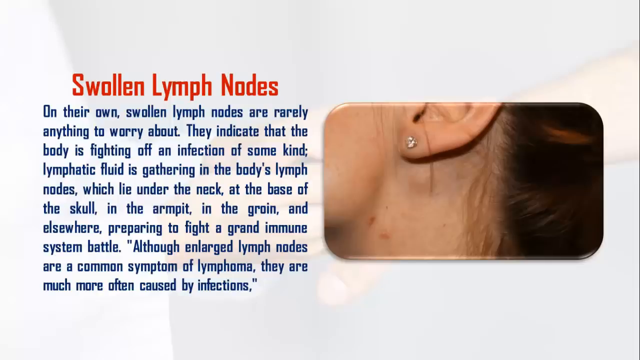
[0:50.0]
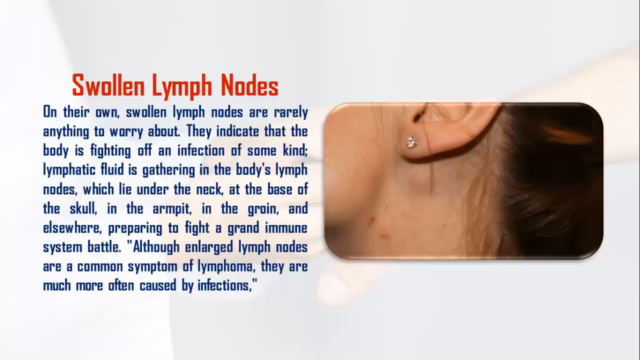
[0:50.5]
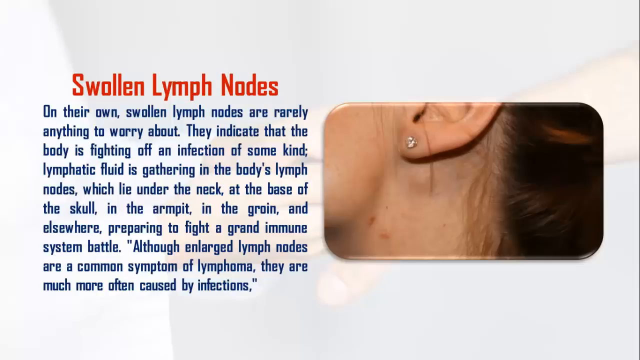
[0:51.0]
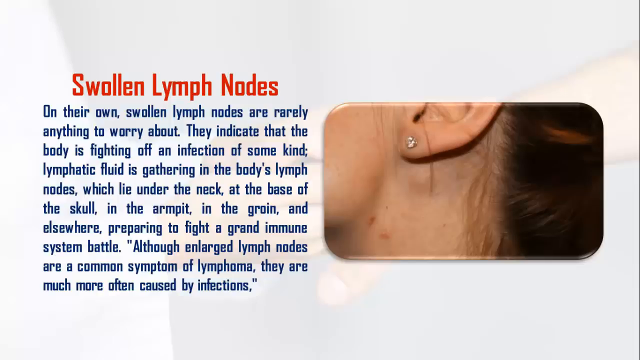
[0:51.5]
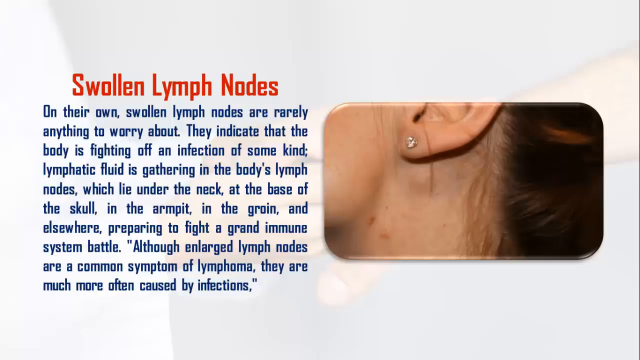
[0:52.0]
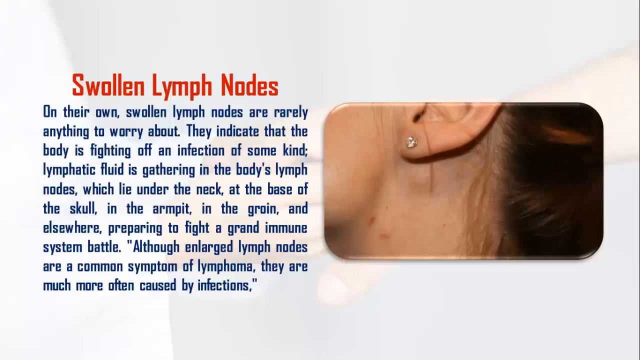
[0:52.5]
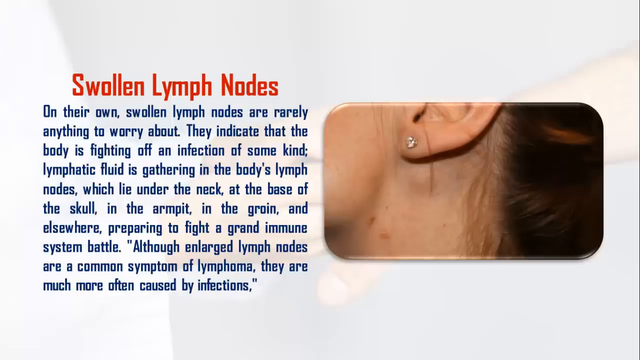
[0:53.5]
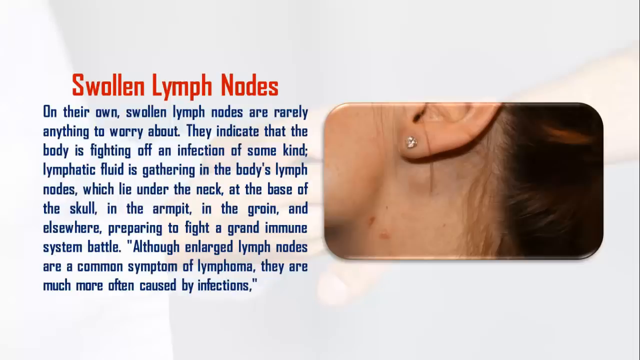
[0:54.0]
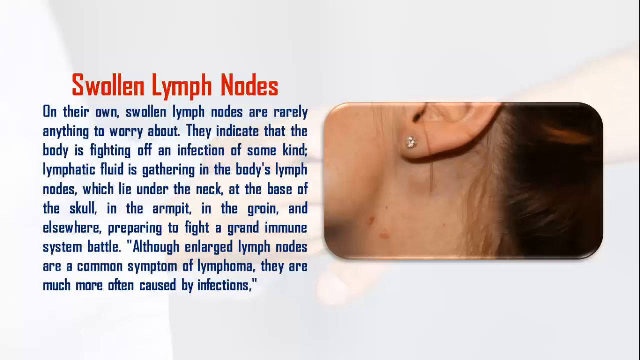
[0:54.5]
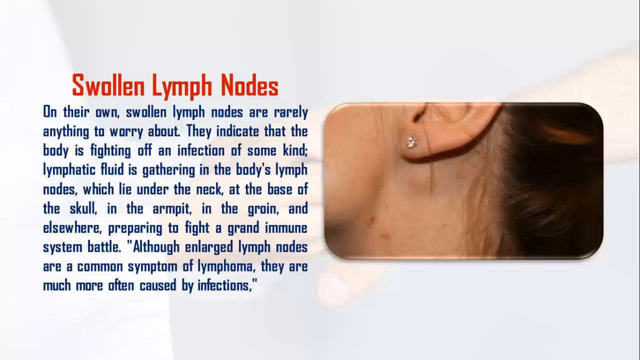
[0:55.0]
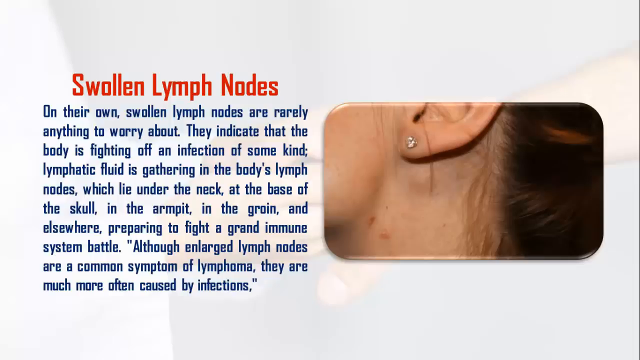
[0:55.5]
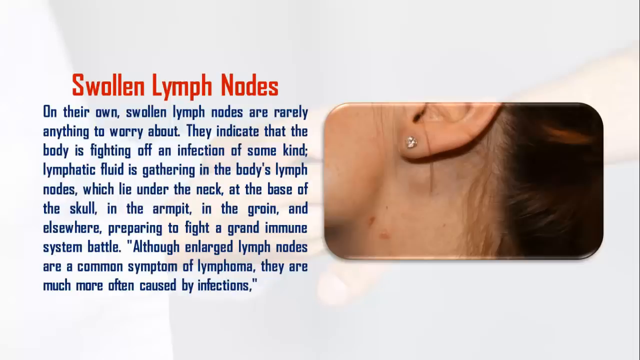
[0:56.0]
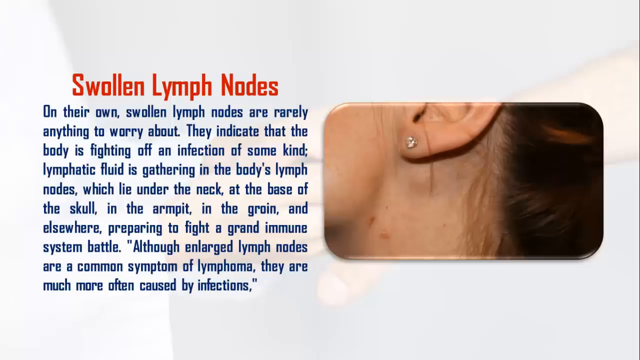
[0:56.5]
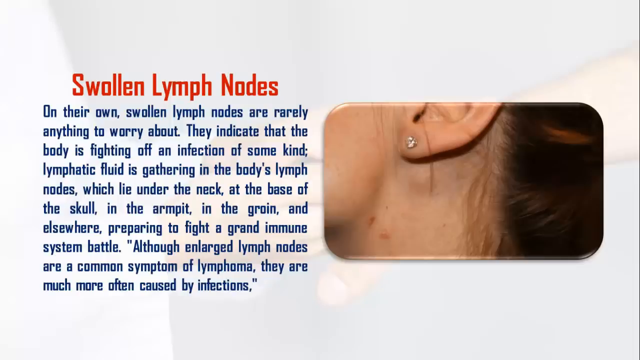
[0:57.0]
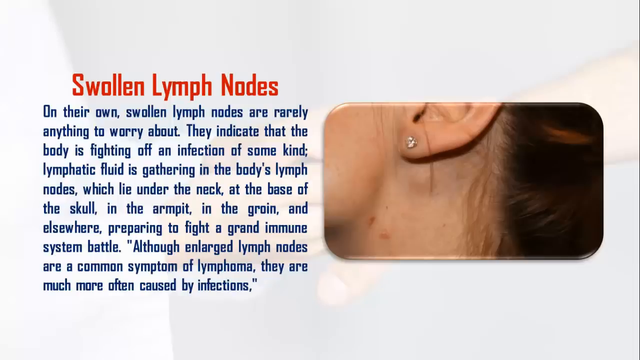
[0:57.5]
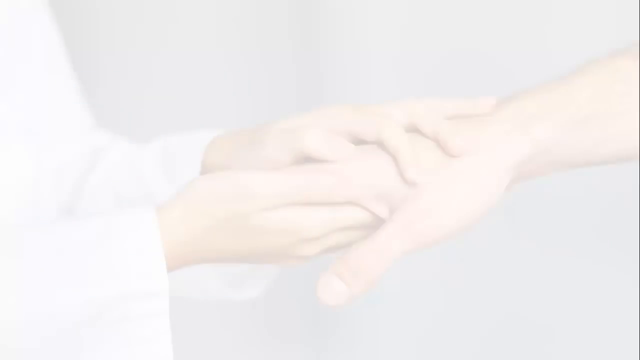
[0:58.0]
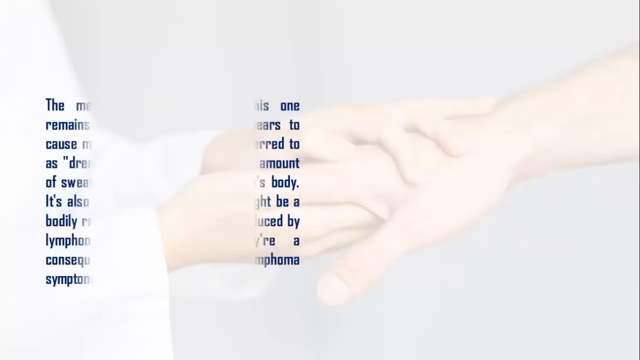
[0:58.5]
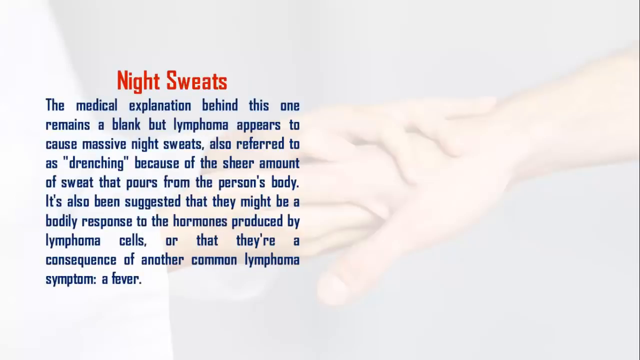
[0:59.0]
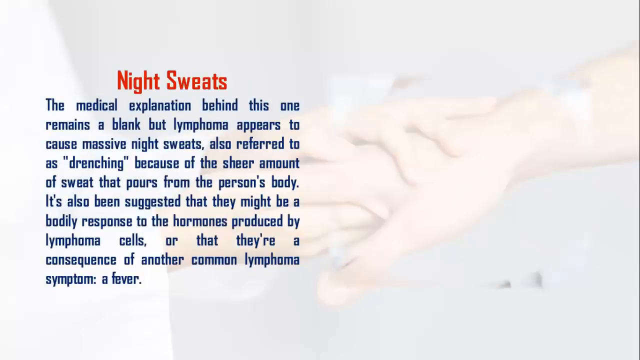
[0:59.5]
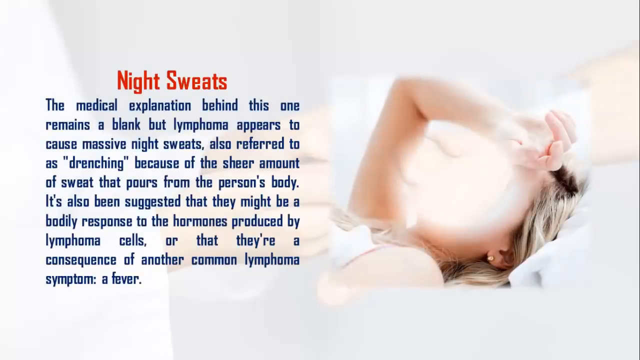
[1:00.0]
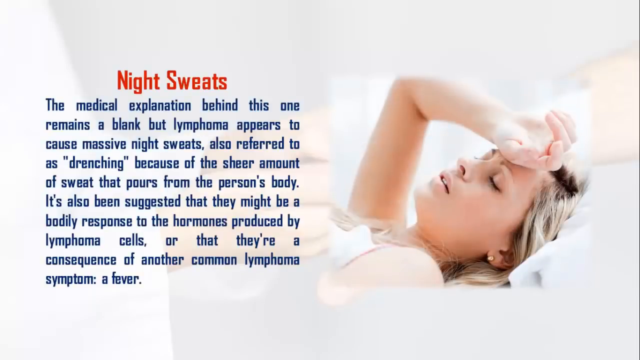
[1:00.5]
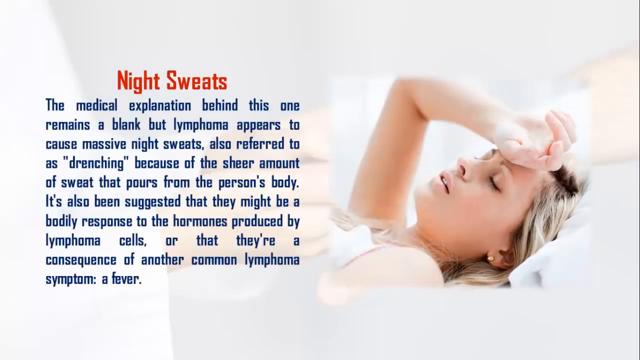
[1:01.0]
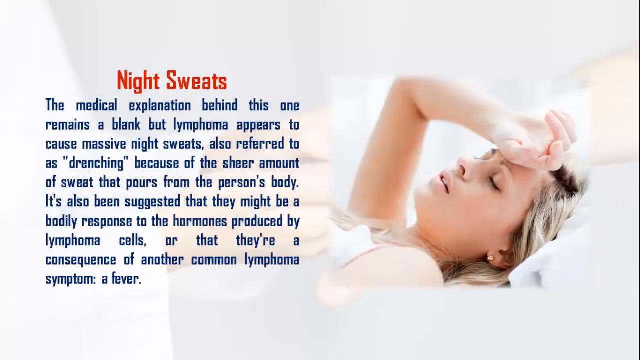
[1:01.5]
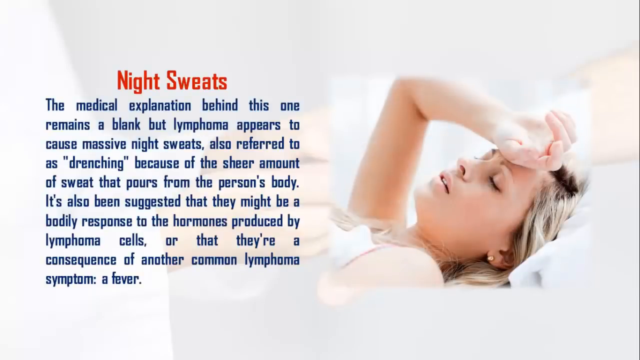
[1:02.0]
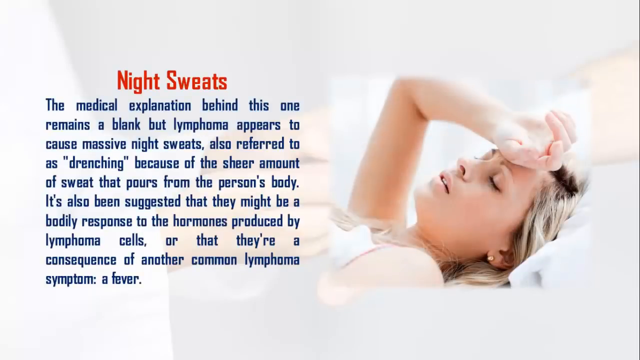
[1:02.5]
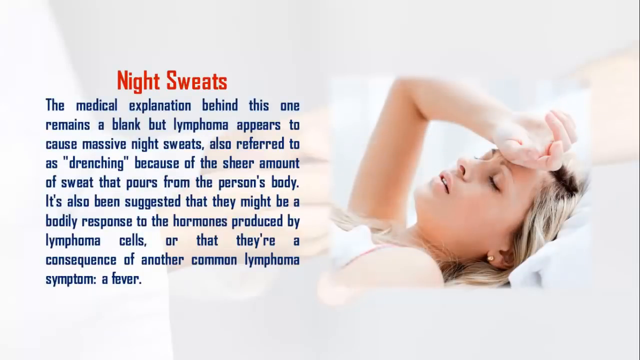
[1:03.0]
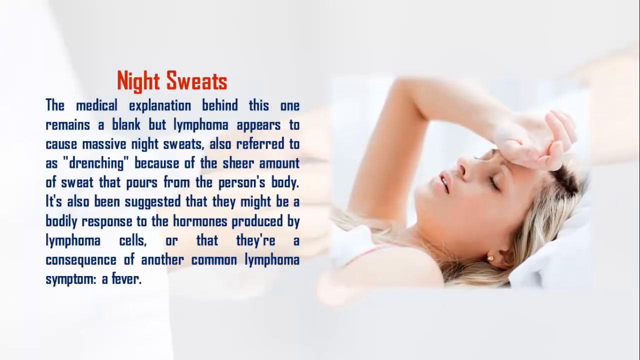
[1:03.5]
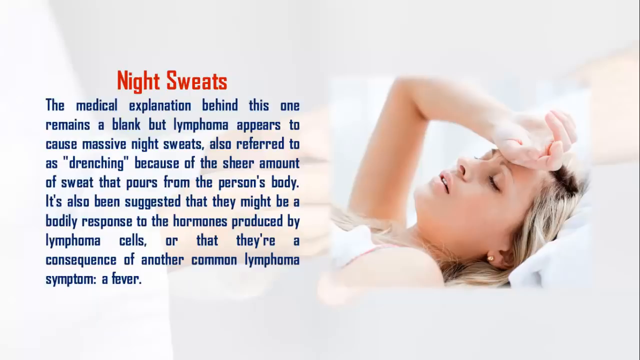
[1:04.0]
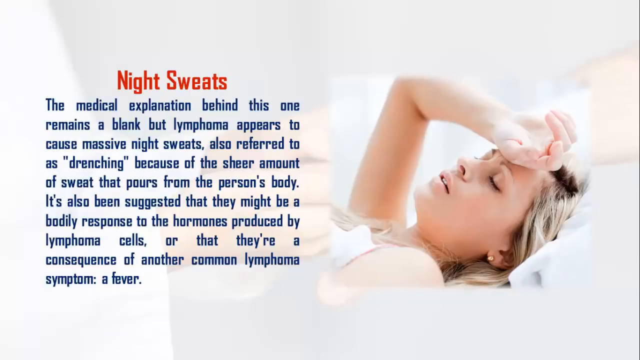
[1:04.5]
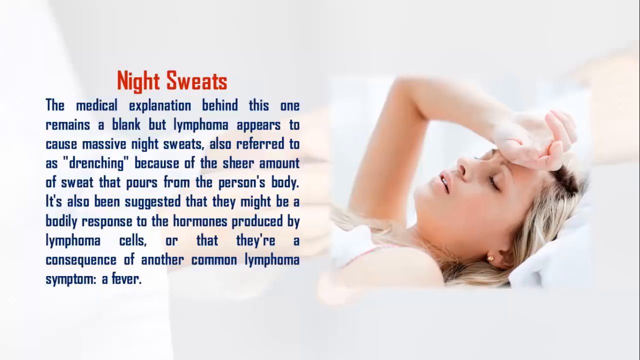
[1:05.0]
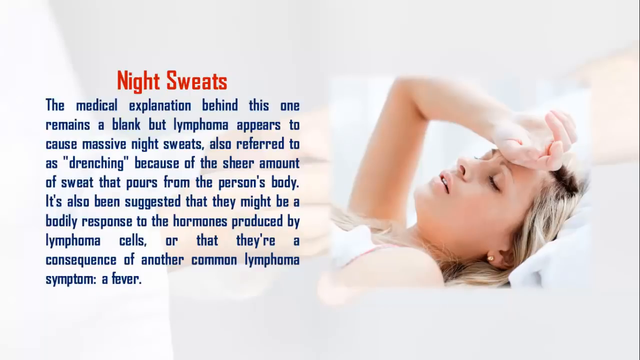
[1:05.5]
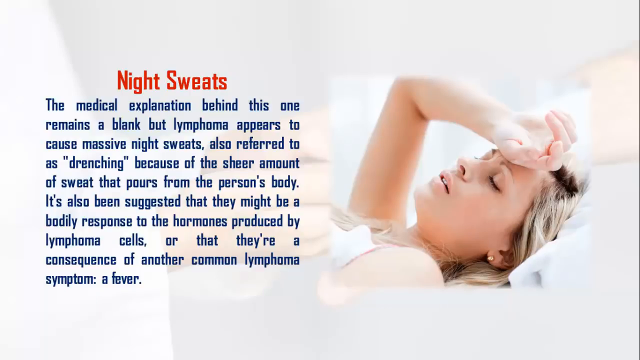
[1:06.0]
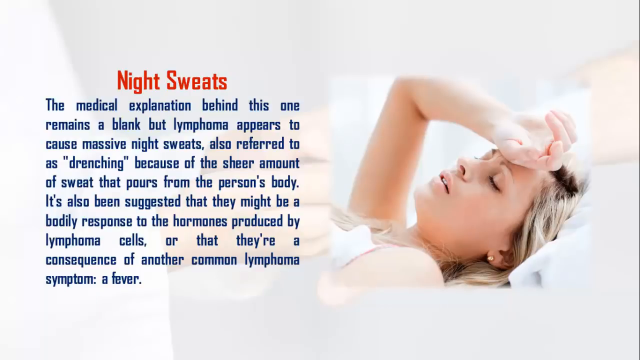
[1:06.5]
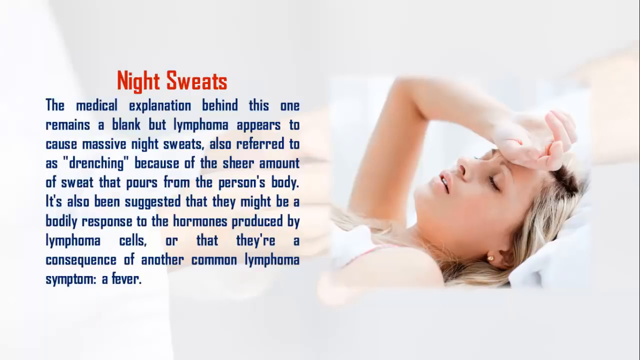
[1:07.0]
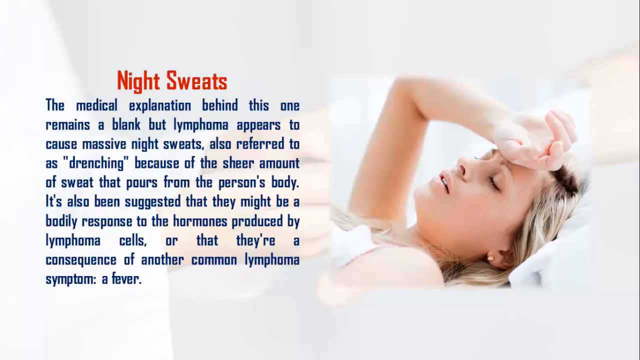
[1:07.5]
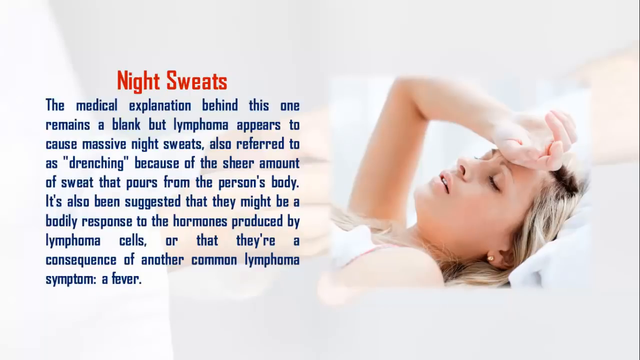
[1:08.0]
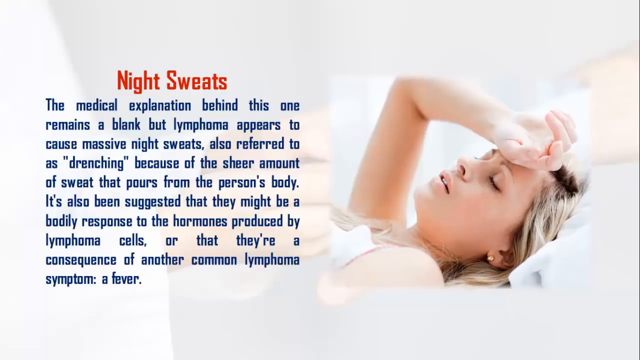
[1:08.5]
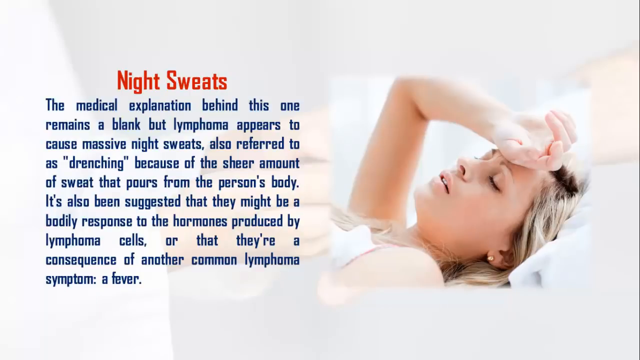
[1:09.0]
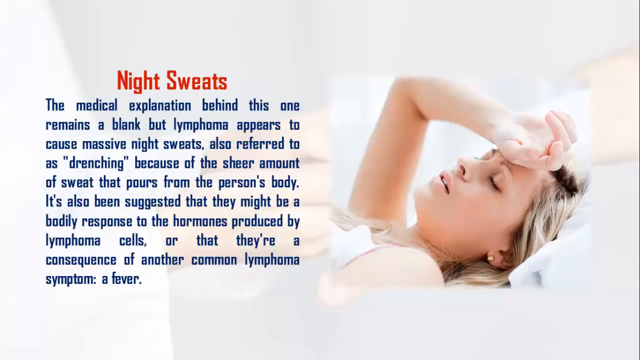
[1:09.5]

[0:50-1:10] The swollen lymph nodes text disappears and new words and a new picture appear. The white hazy background remains, with the white lab jacket and the two hands reaching for each other still visible. On the right is a picture of a young woman, probably in her mid-twenties, lying in bed and obviously in pain. She has blonde hair with some dark roots, her right hand is bent up across her forehead with the palm up and fingers bent, her eyes are closed and her lips are parted slightly. She looks like she is wearing a nightgown and has a white sheet or blanket over her. To the left, large red letters read "night sweats." Underneath, blue letters read: "The medical explanation behind this one remains a blank, but lymphoma appears to cause massive night sweats, also referred to as drenching, because of the sheer amount of sweat that pours from the person's body. It's also been suggested that they might be a bodily response to the hormones produced by lymphoma cells, or that they're a consequence of another common lymphoma symptom, a fever."